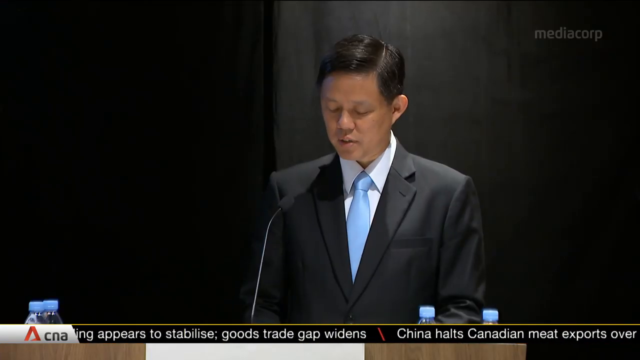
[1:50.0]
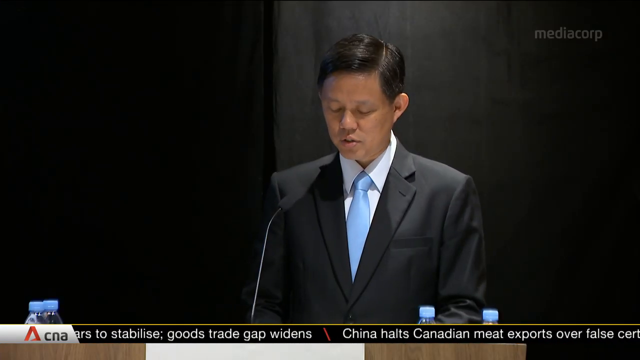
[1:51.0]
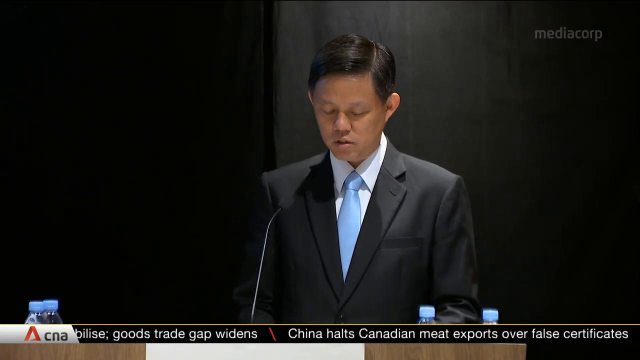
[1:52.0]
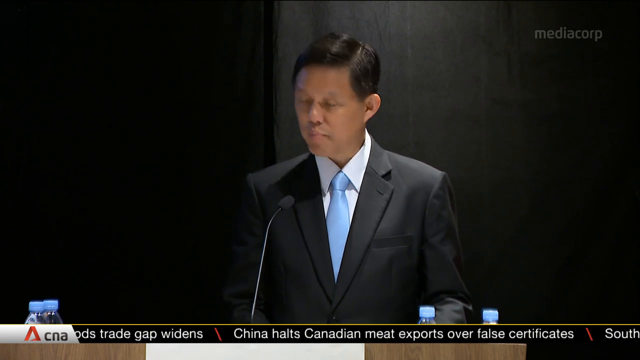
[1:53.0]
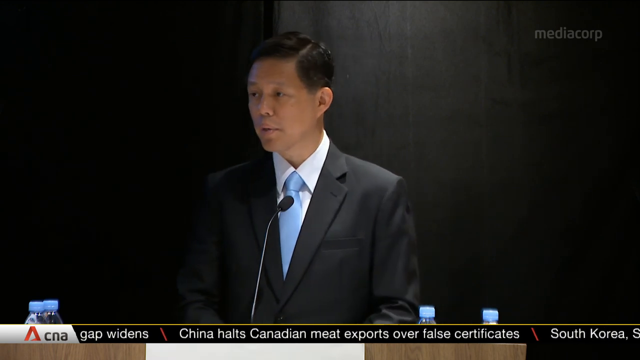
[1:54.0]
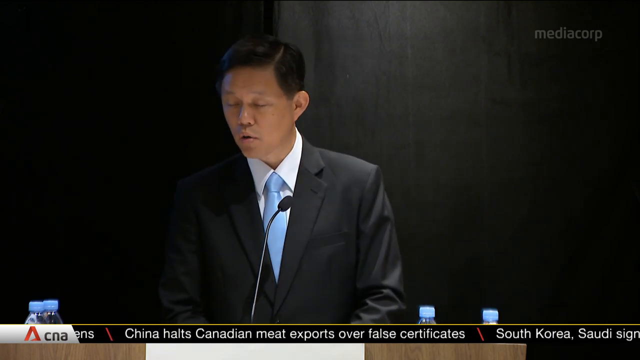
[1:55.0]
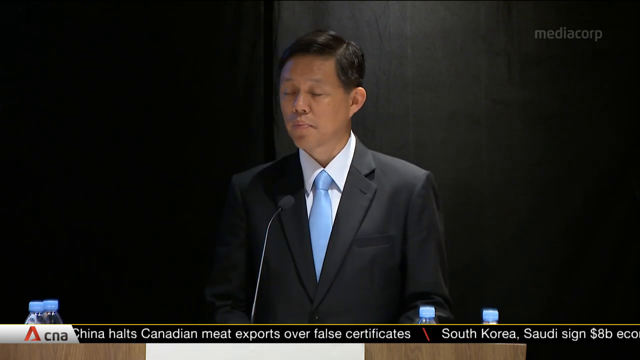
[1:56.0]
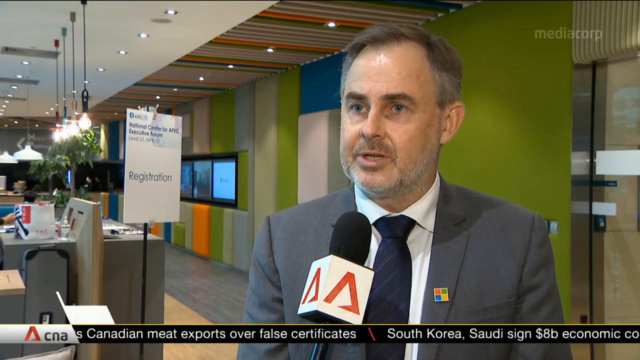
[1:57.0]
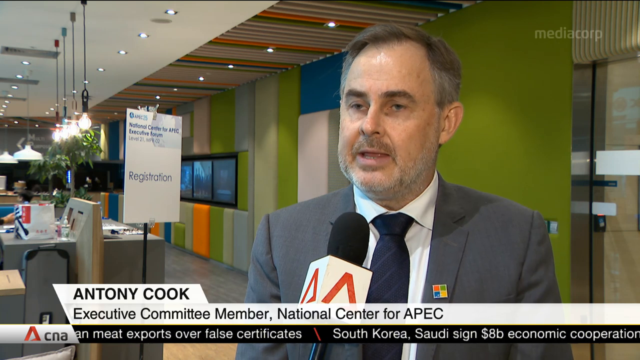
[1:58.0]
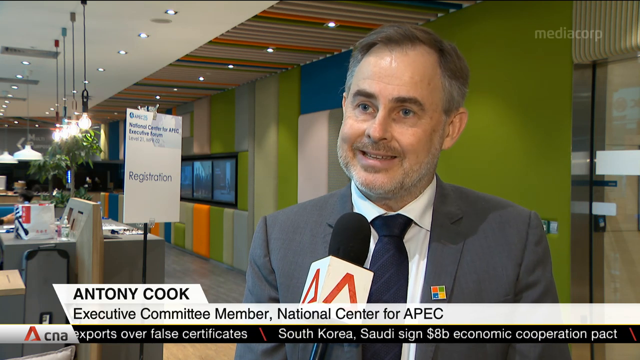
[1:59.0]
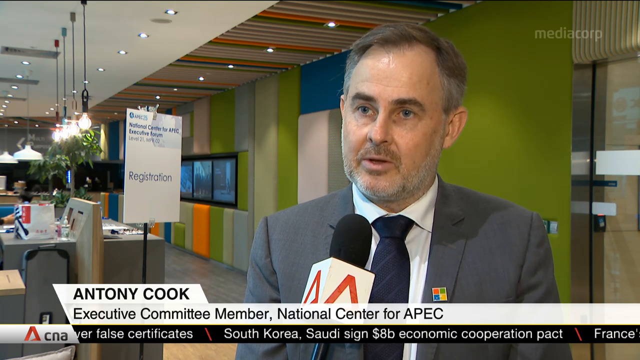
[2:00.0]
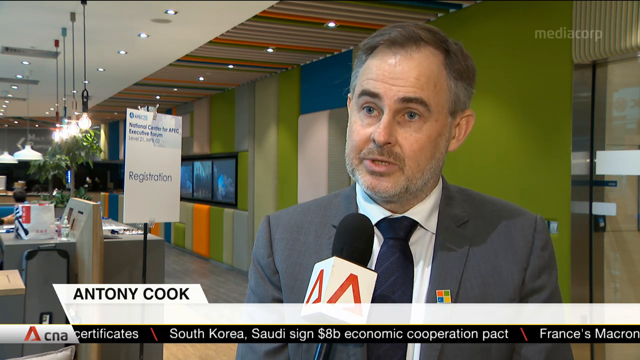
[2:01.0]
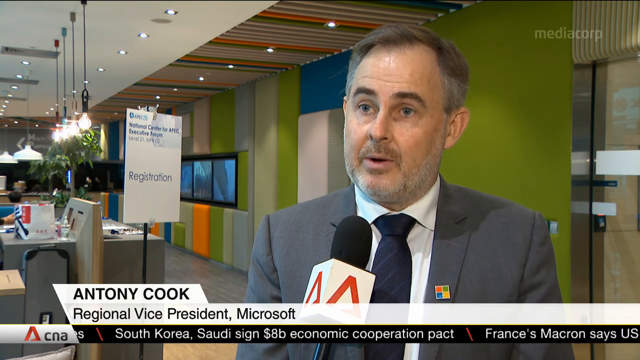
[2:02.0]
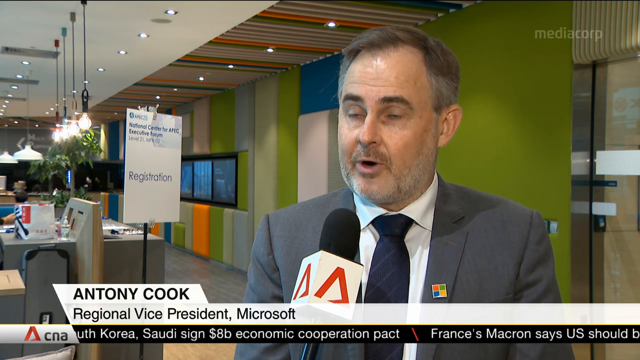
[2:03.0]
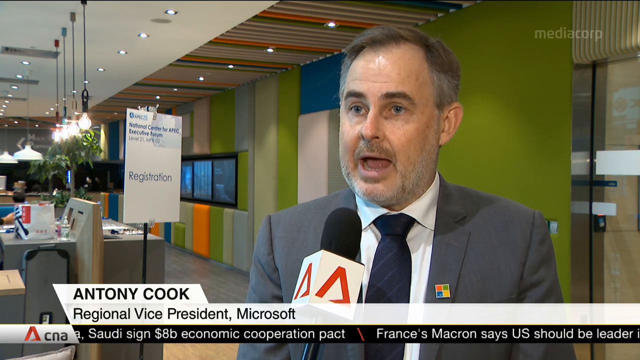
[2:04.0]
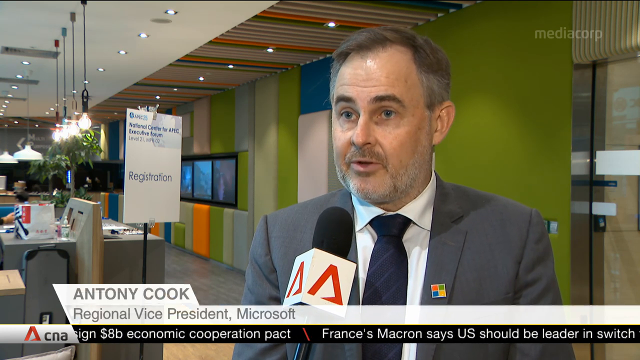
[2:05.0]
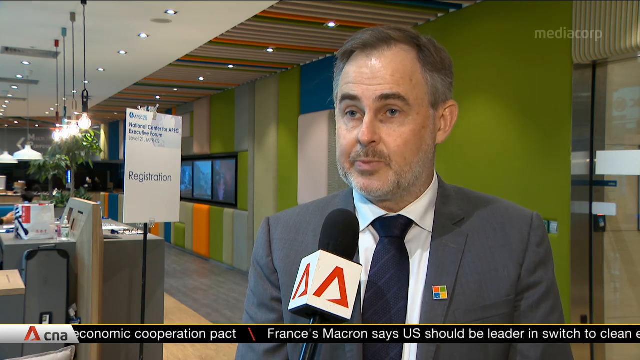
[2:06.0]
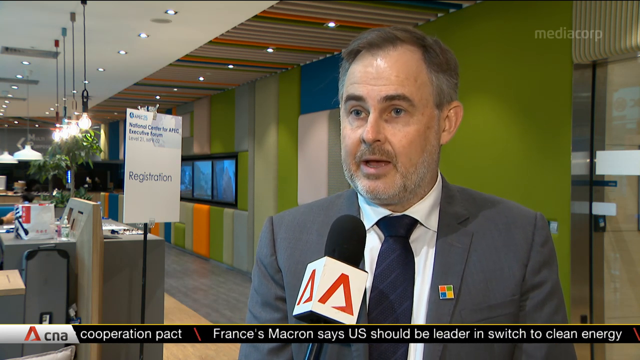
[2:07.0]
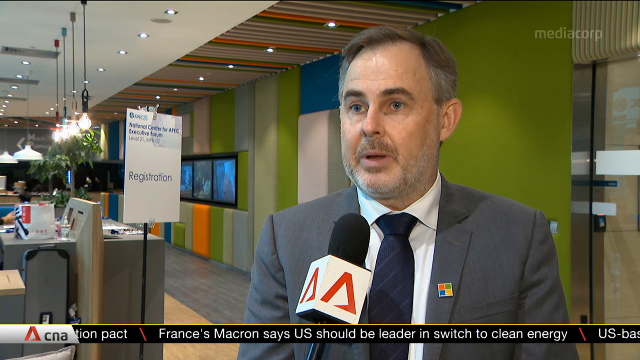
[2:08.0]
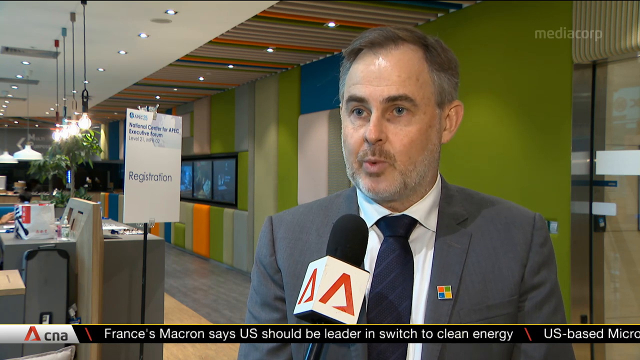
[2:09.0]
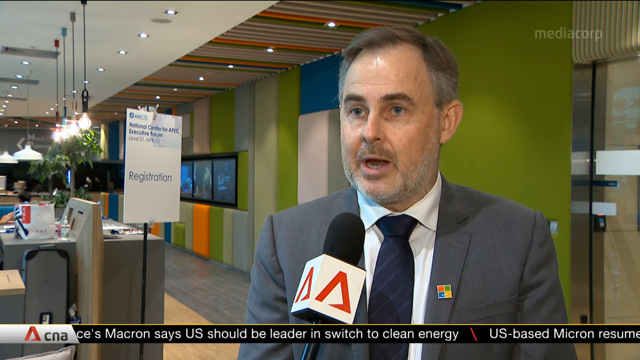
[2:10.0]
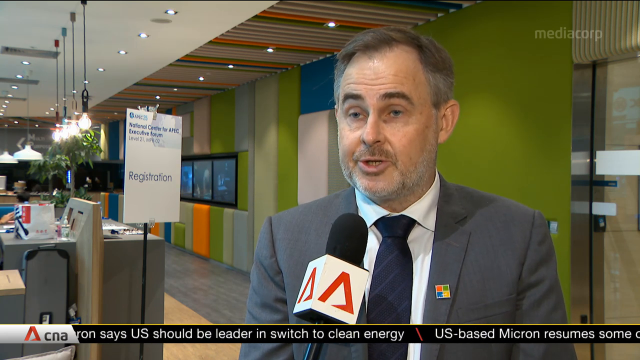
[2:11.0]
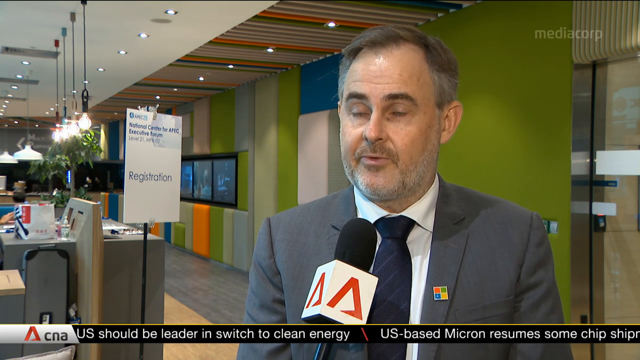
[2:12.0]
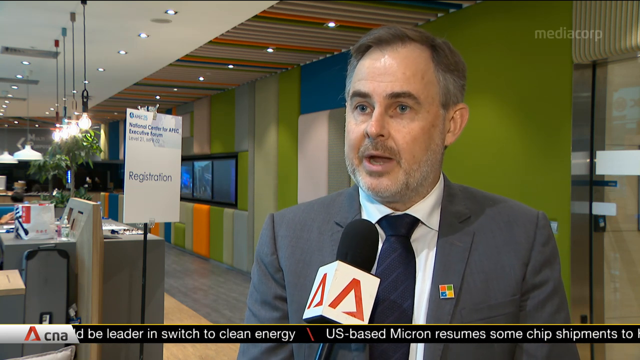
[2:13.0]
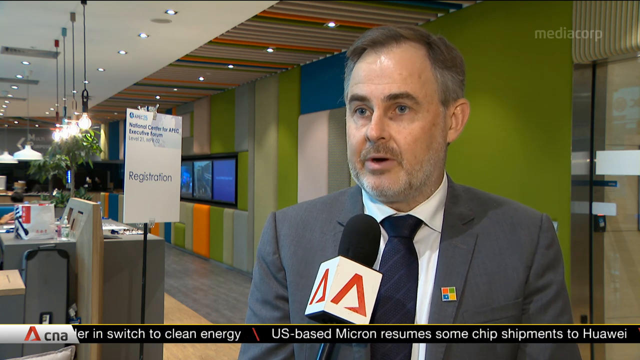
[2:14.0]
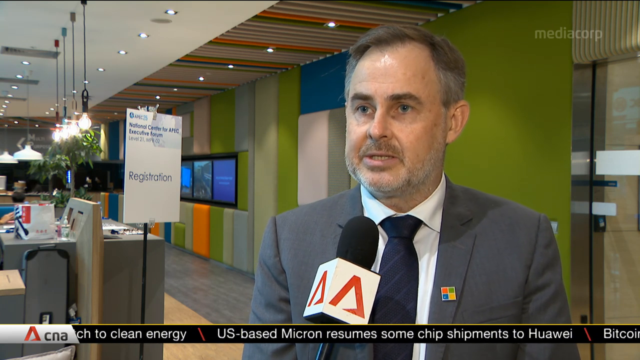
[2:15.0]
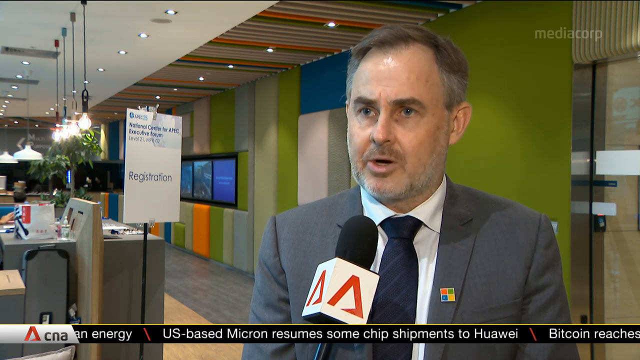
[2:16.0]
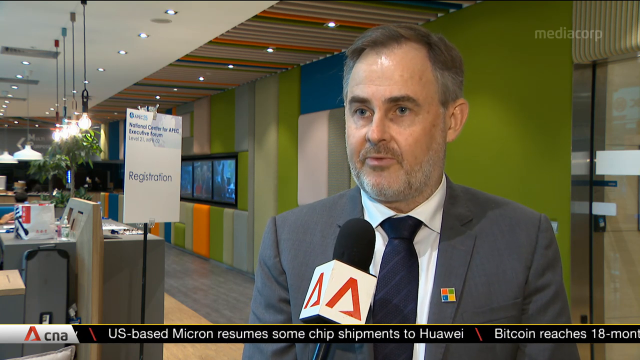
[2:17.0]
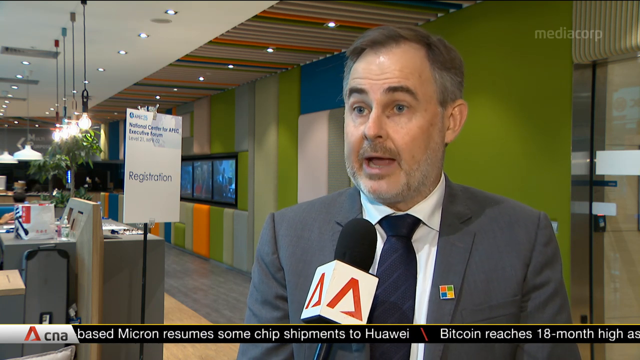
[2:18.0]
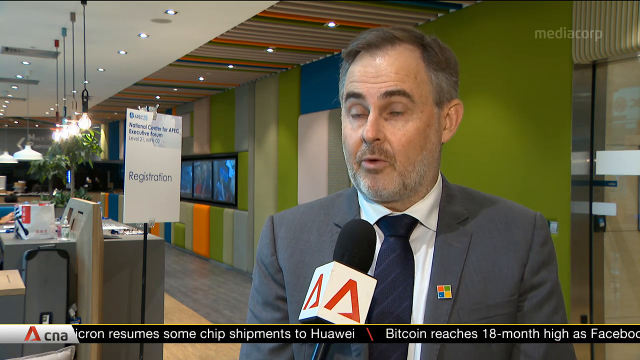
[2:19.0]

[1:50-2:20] The man continues to address the room, then the video cuts to a close-up of the man who was sitting on the right on the stage. He is in an office or conference environment, with tables, chairs, screens and lights behind him. A caption animates over his image: the top line reads "Anthony Cook" and beneath it "Executive committee member National Centre for APEC". Behind him is a sign that reads "Registration", and the wall behind him has different coloured panels, some lime green and some orange. A ticker still runs across the bottom of the screen with a variety of headlines. He talks into a microphone held by a reporter, and the caption animates to identify him as the regional vice president of Microsoft. He speaks seriously and earnestly as he answers the interviewer's question.